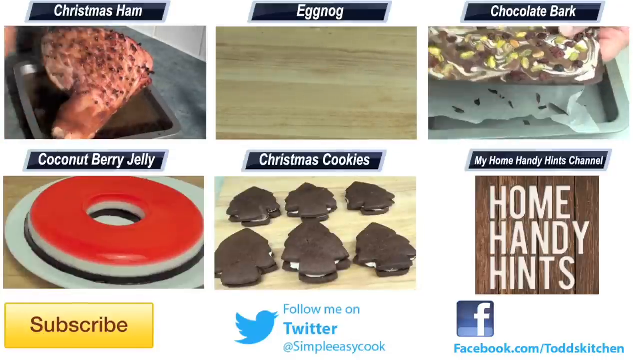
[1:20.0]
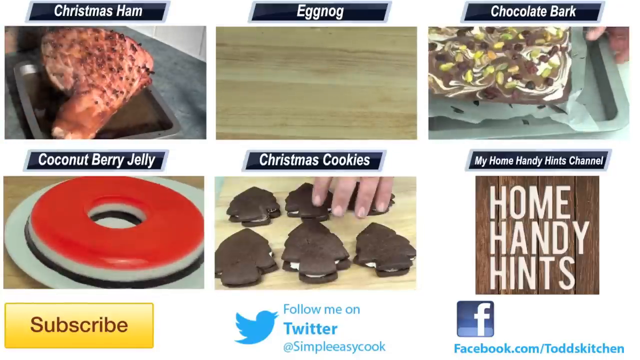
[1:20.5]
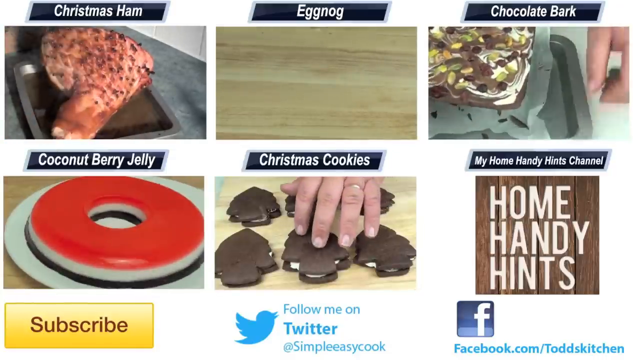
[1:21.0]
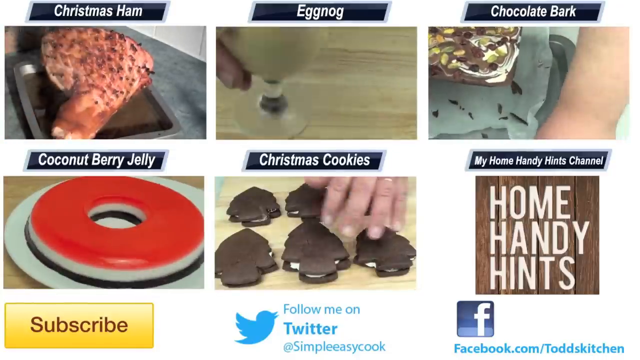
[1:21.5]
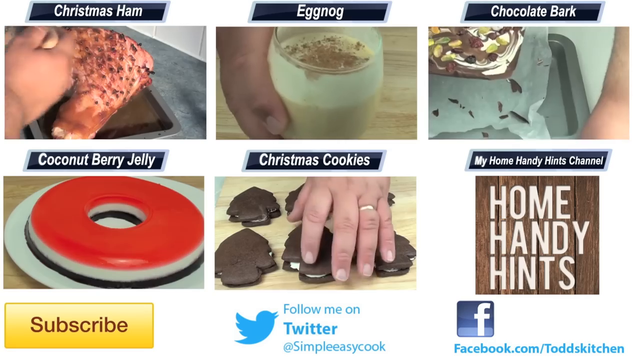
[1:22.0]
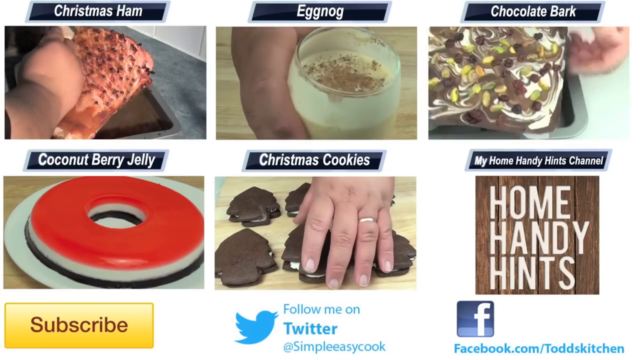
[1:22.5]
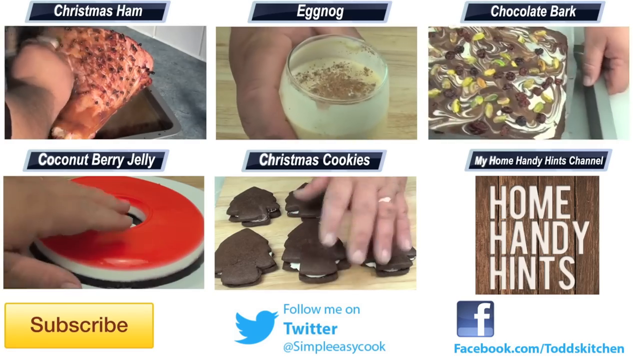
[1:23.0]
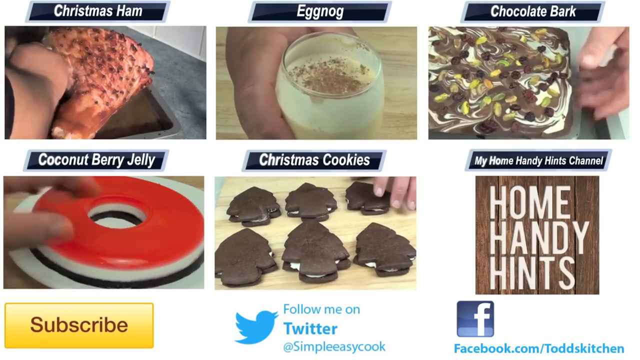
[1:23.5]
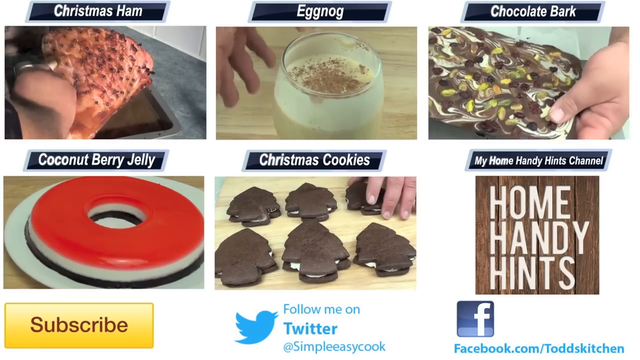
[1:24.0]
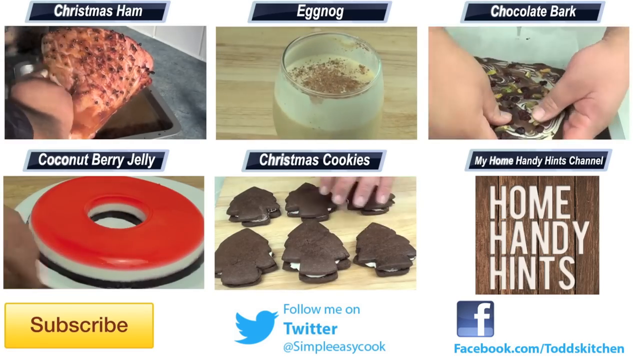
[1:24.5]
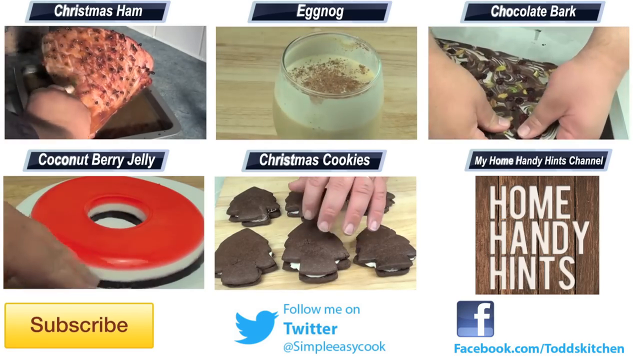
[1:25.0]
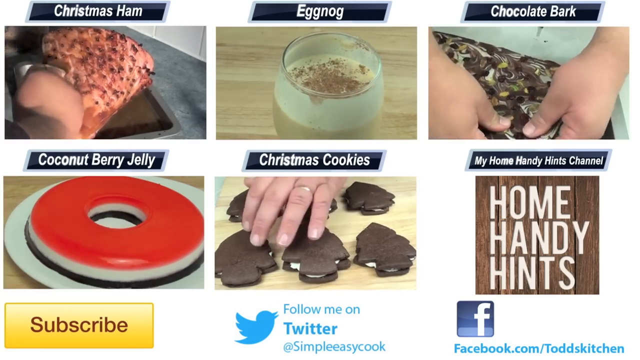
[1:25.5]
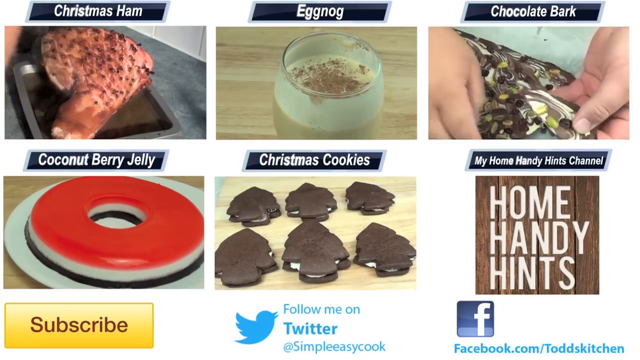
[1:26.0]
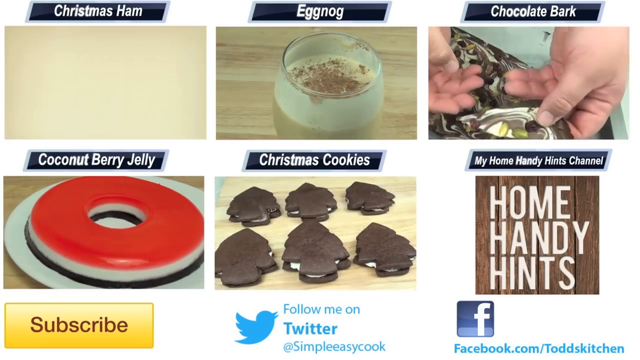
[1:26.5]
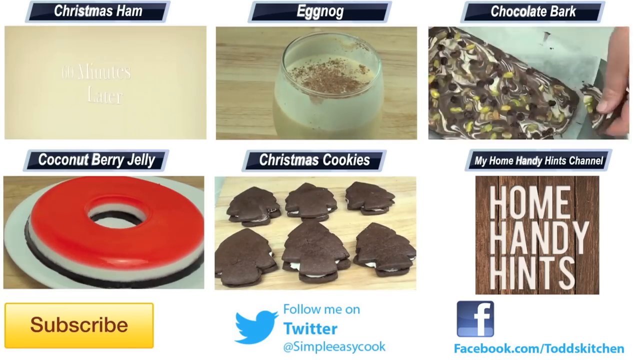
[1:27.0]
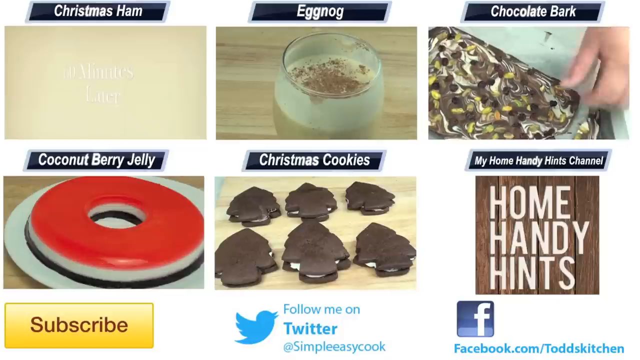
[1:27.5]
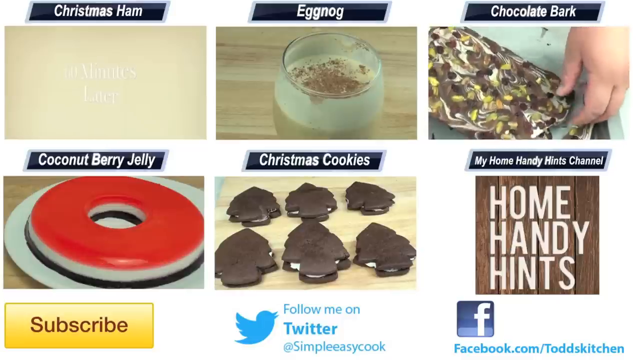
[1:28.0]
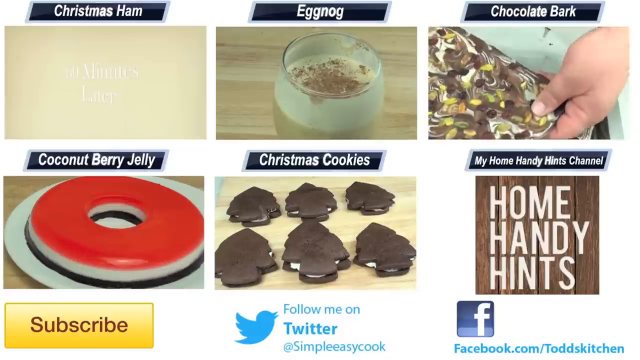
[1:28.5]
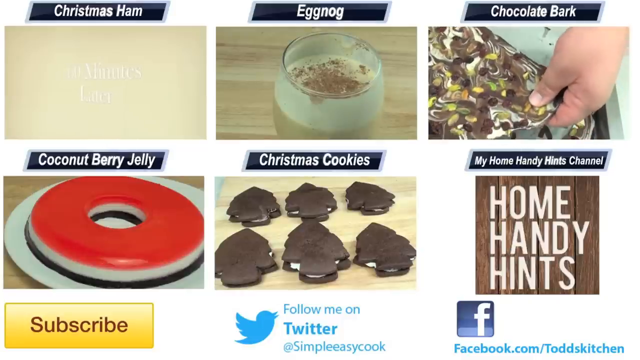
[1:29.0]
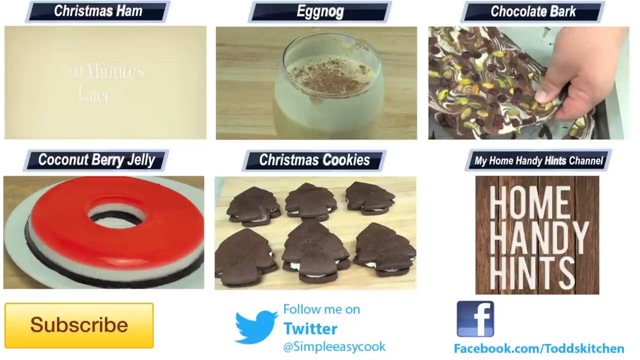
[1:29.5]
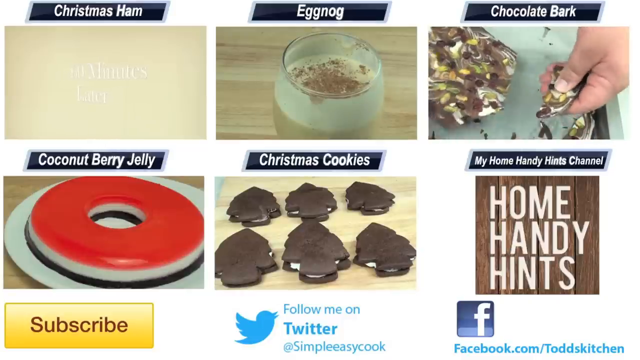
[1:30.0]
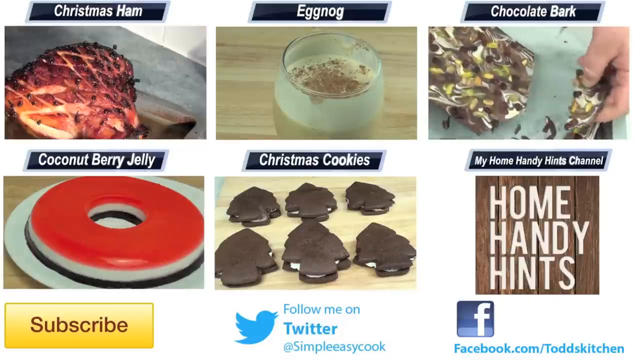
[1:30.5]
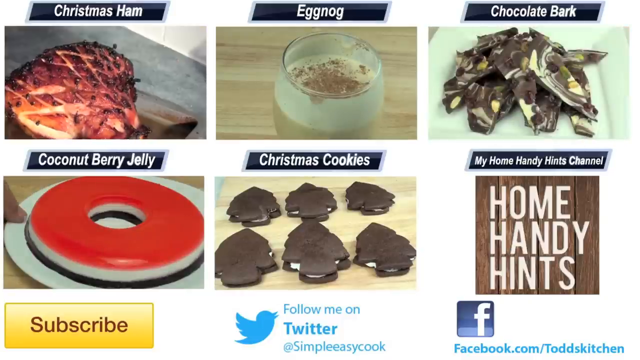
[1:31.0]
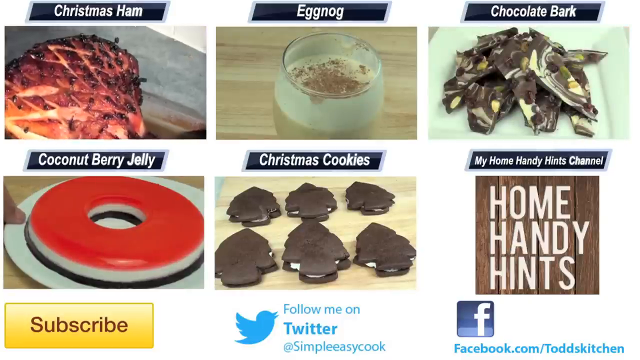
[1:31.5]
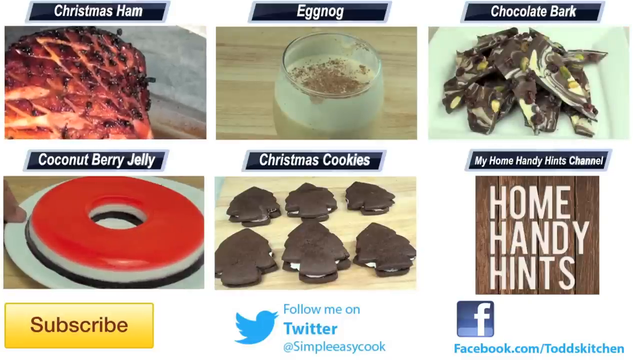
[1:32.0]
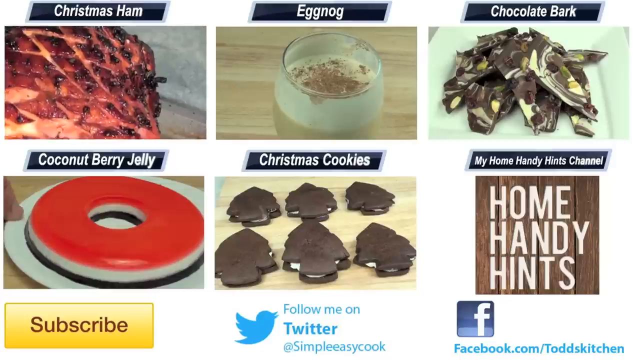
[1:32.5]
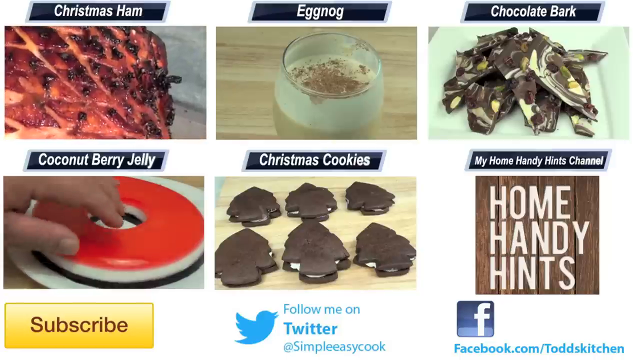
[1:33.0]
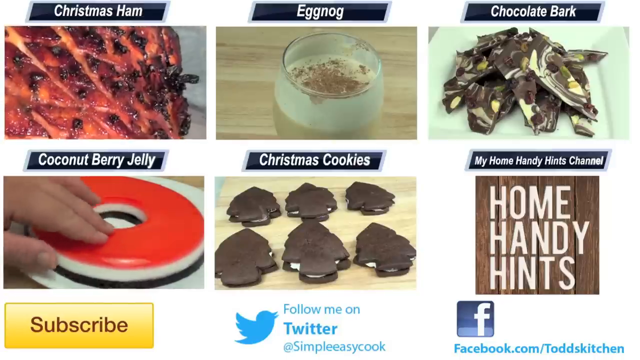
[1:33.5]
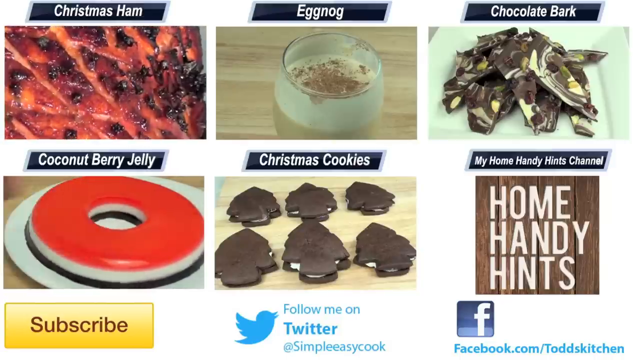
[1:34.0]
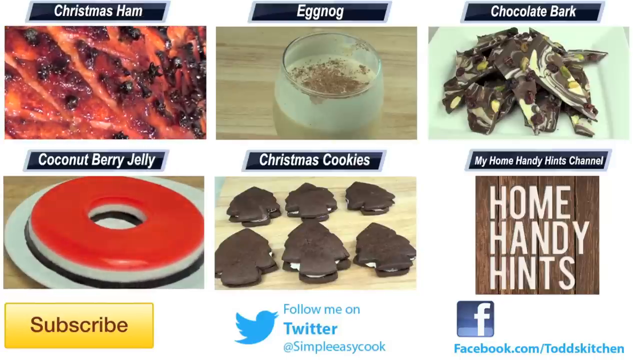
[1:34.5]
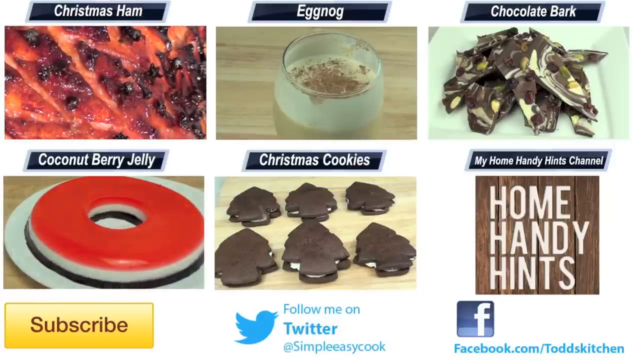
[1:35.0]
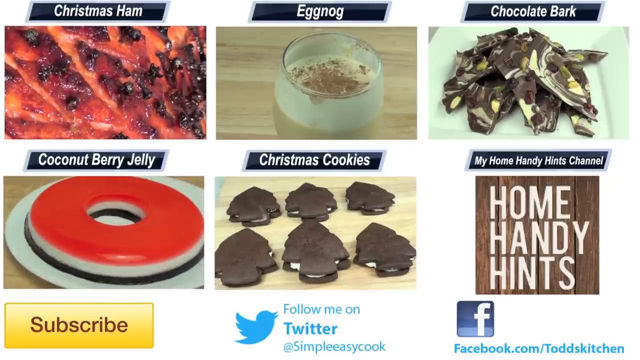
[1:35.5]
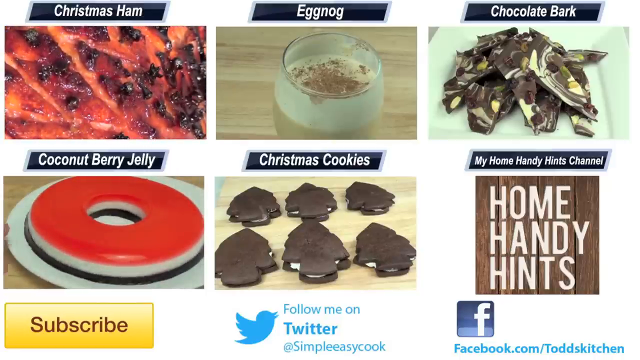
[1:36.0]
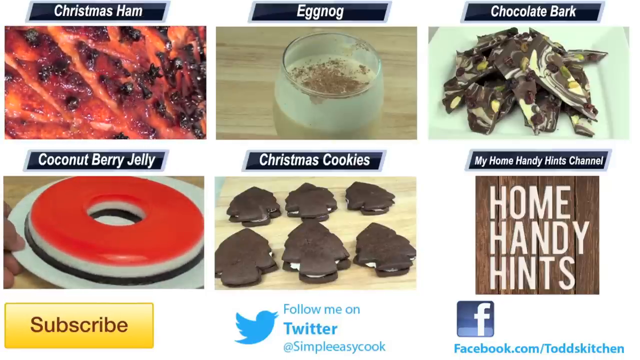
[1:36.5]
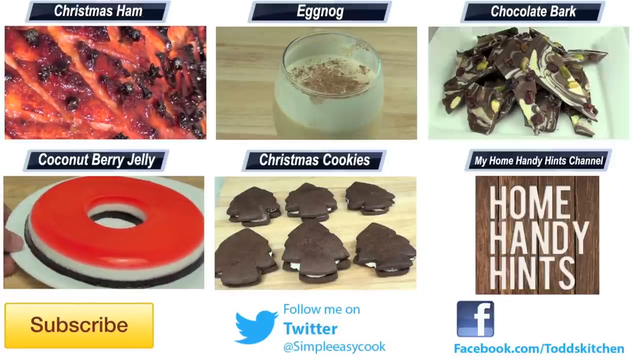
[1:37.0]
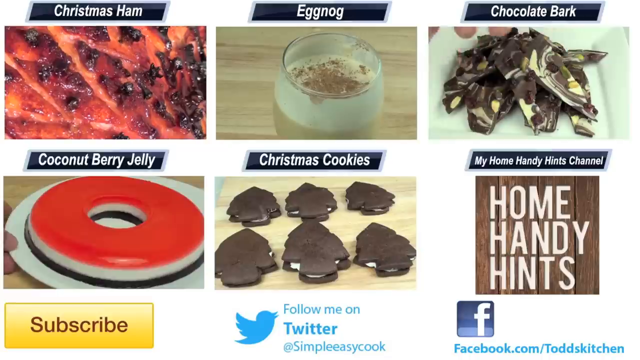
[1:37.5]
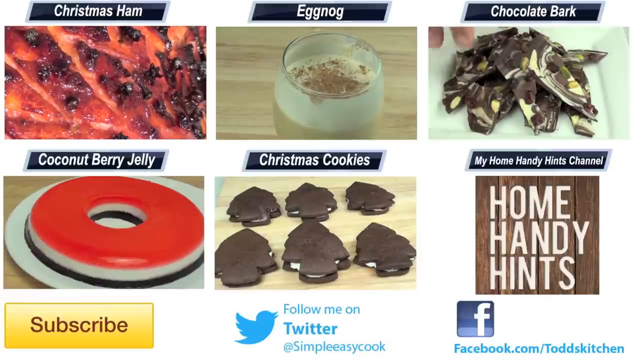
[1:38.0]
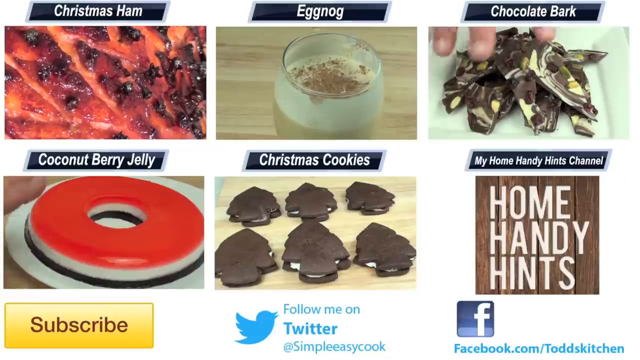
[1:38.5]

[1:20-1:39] The screen is divided into six segments showing different kinds of food from Todd's Home Handy Hints channel. Blue text at the bottom says "follow me on Twitter", brown text in the bottom left says "subscribe", and Todd's Facebook contact information appears in blue in the lower right of the image. Each of the six areas is a video, so there is a lot of motion on the screen. Now only the chocolate bar sixth of the screen is animated: someone's hands, probably Todd's, break off a piece of the chocolate bar, which has swirls of brown, white and yellow. Then a Christmas ham appears in the upper left, and the view zooms in on the ham, which is stuck with cloves.